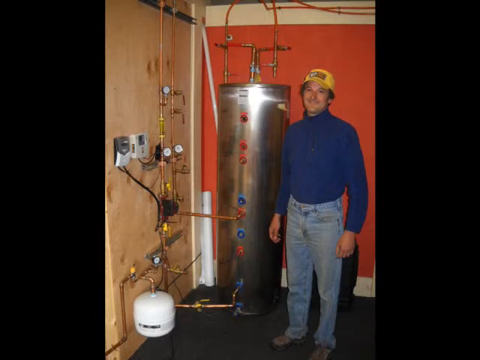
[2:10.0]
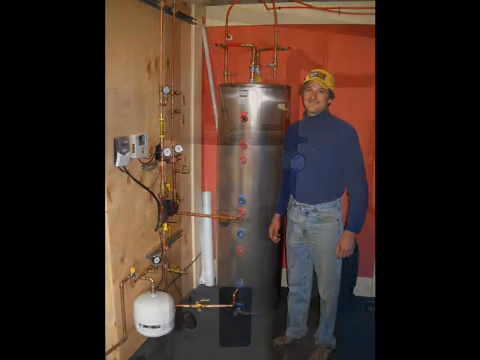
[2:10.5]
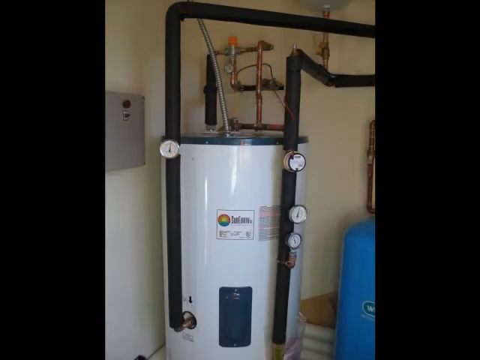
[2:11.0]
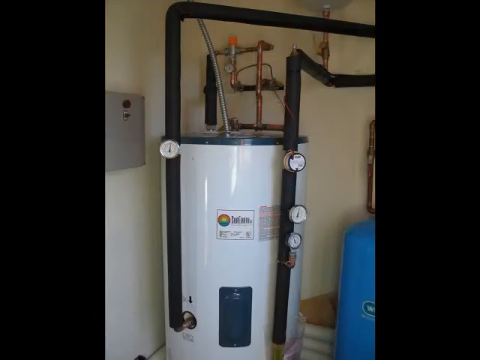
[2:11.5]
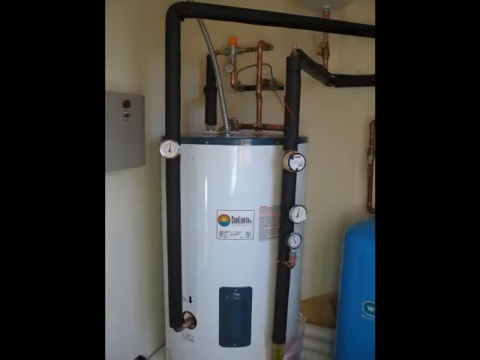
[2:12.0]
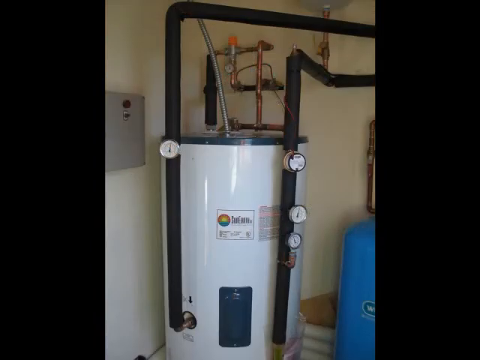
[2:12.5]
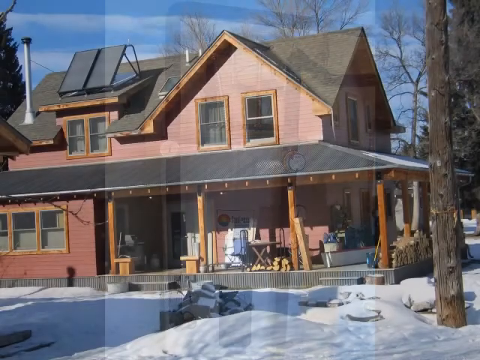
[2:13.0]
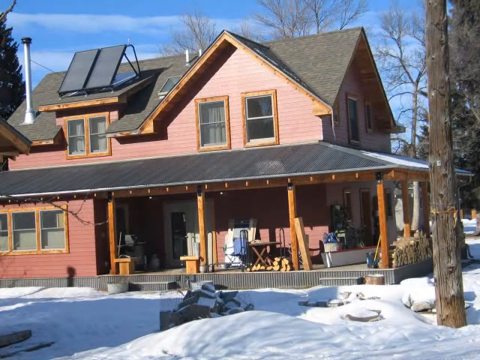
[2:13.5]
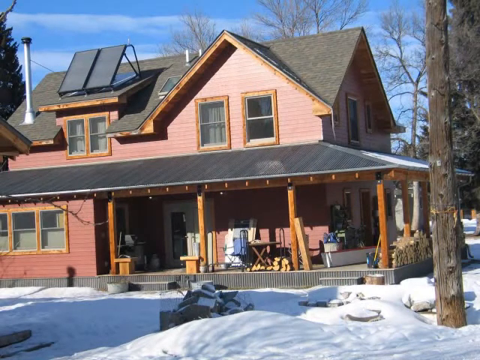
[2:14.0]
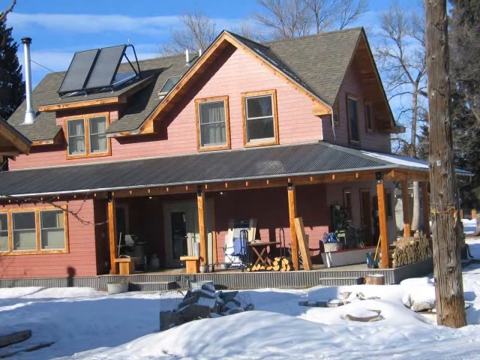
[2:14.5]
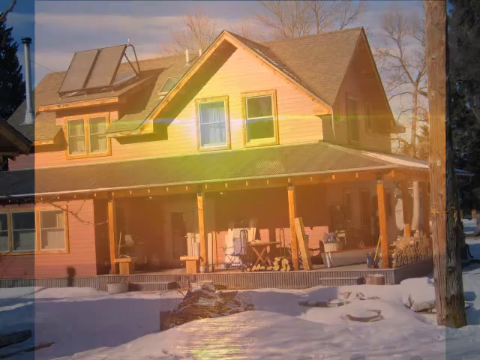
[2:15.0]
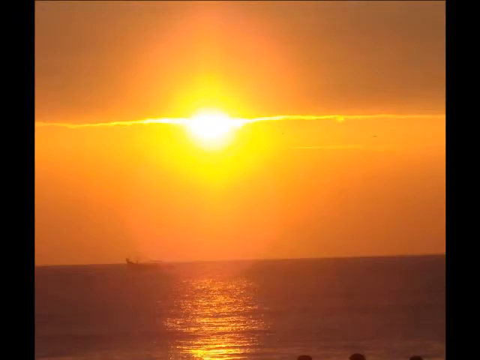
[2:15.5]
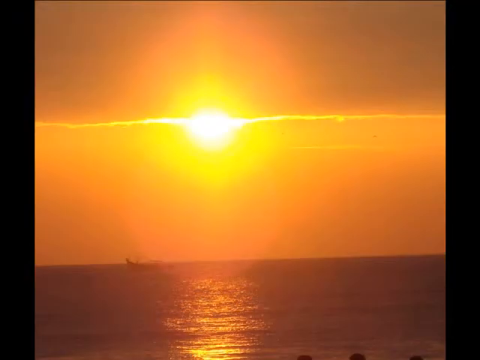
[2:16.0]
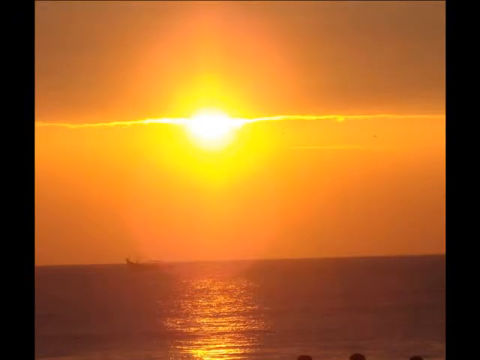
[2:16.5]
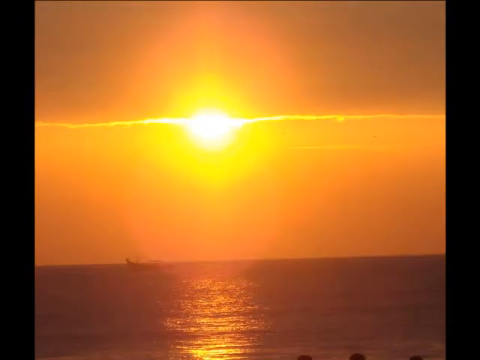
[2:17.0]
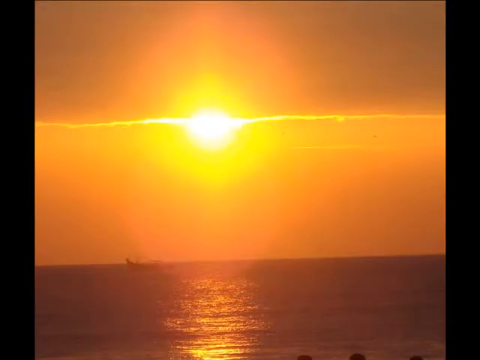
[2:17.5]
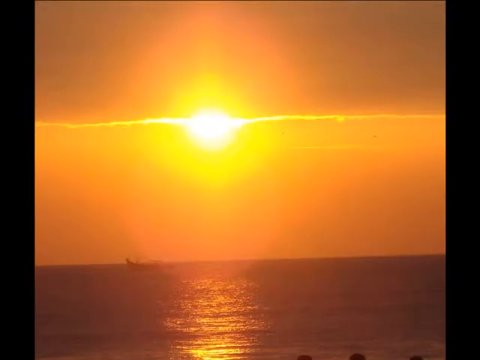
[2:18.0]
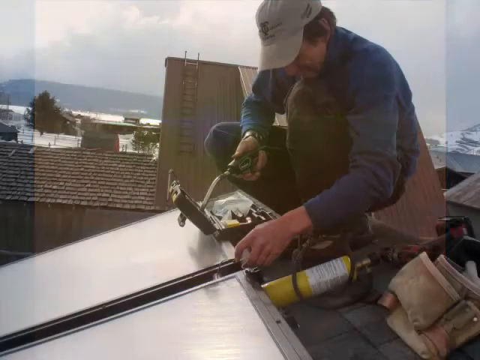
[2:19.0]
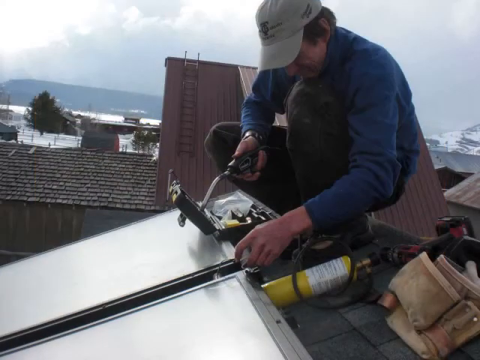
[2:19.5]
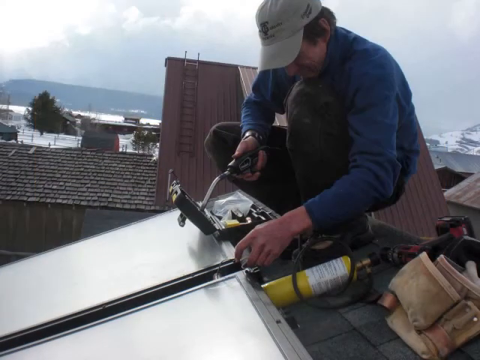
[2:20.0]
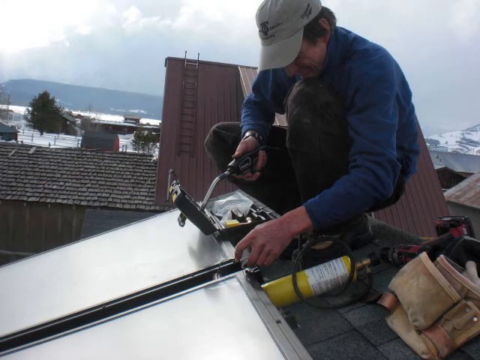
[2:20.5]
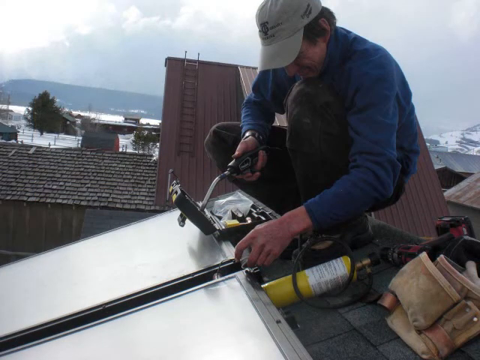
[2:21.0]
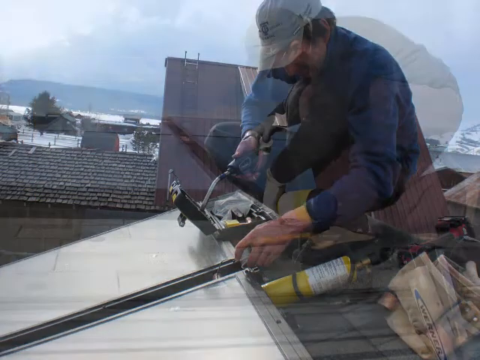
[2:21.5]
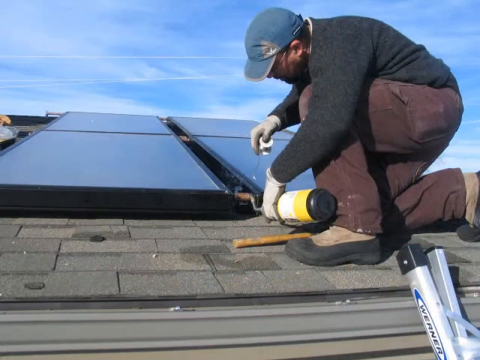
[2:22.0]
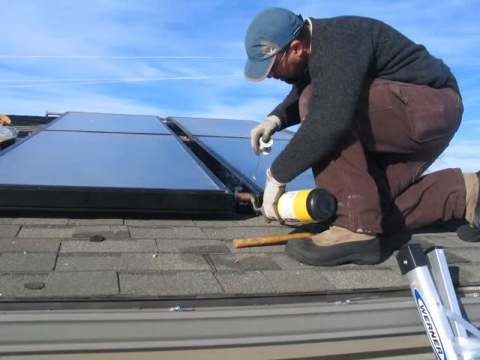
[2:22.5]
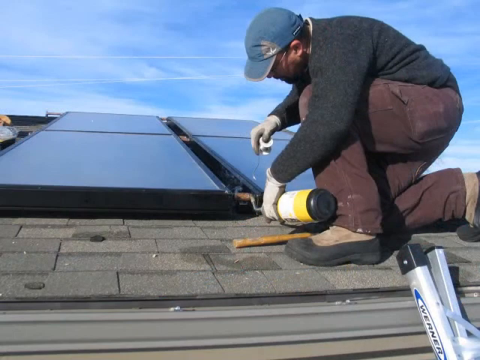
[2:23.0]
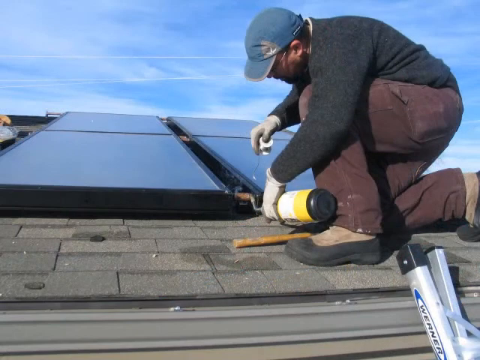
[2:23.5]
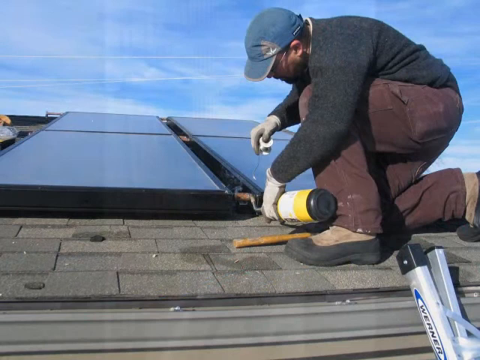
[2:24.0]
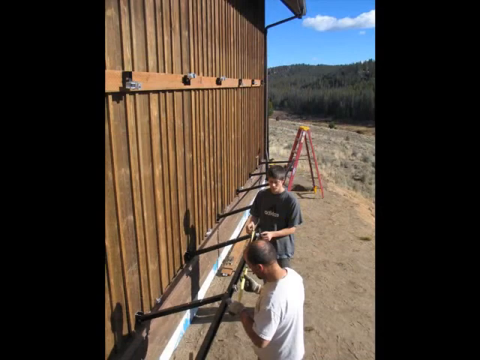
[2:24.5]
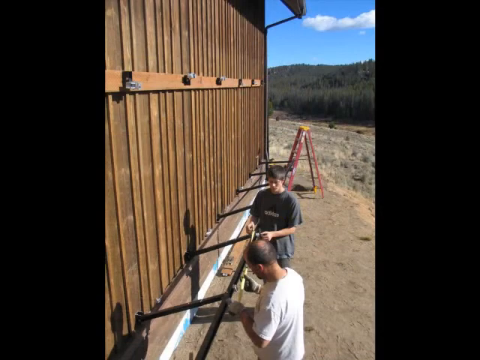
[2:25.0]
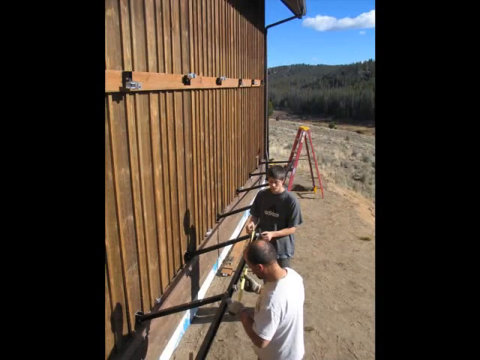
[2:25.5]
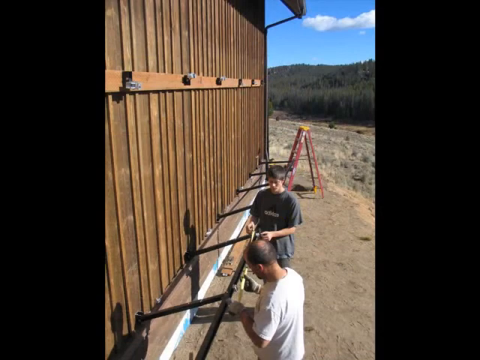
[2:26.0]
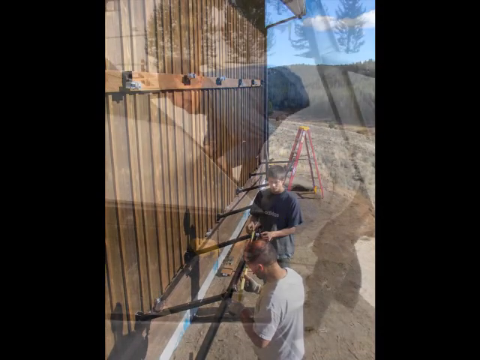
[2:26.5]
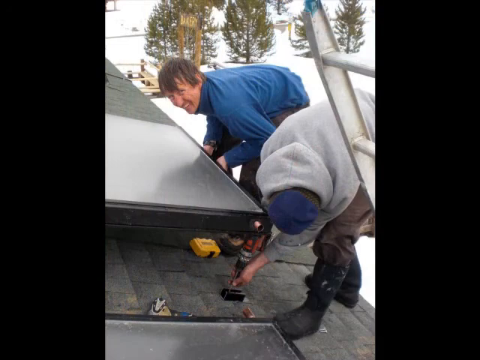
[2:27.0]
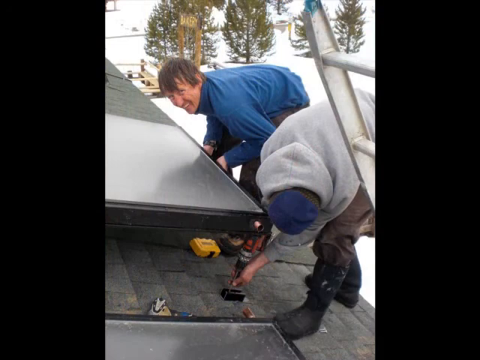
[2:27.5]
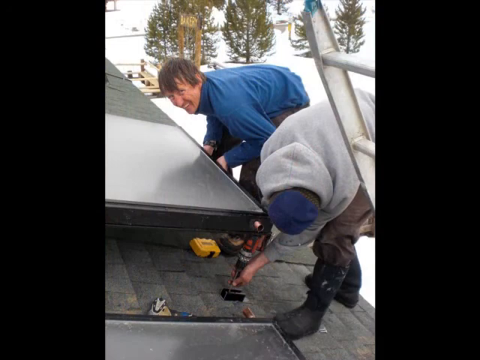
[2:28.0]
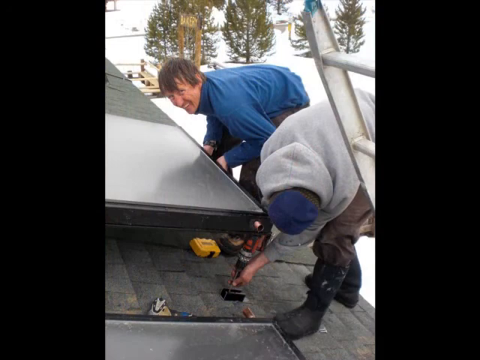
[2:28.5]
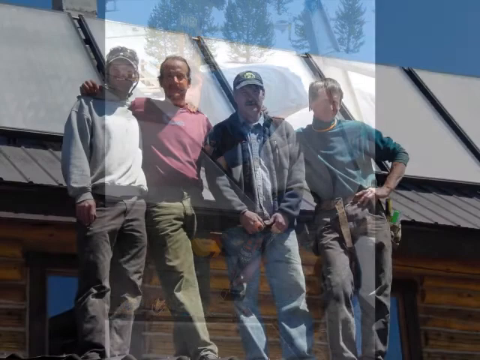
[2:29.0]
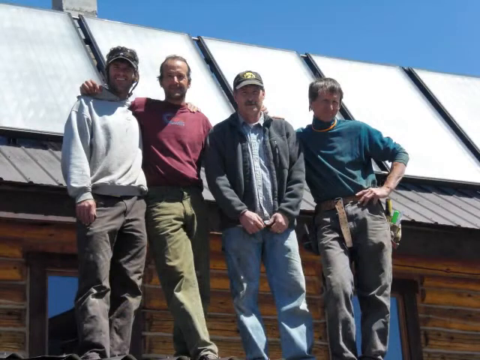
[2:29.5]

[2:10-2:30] A photograph shows one of the tanks. The next photograph is of a house with a porch holding a lot of logs; the house is possibly wooden and has wooden window frames, with two panels attached to the roof. It is winter, with lots of snow around. A hazy sunset over the sea follows, the sky full of oranges, pinks and yellows. The next image seems to show somebody working on one of the roof panels, with a snow-capped mountain in the distance. He holds some kind of tool in his right hand and squats over some panels, and there seems to be a yellow object that looks like a gas cylinder. Next, a yellow gas cylinder is being connected to some panels on a roof, and a man in a thick jumper, trousers, a baseball cap and white gloves bends over, holding the gas cylinder in his left hand and apparently some sort of wheel of wire in his right. Two men then appear to be attaching some sort of device, possibly the framework that holds the panels in place, to the wall of a building in a dusty, sandy-looking place. Next, two men stand on a rooftop, seemingly quite precariously close to the edge, with a large ladder next to them and snow on the ground in the distance; the man at the back smiles at the camera while the other seems to use a screwdriver to put something on the roof. Finally, four men stand in a row looking at the camera, two with their arms around each other, in front of a roof with panels attached.